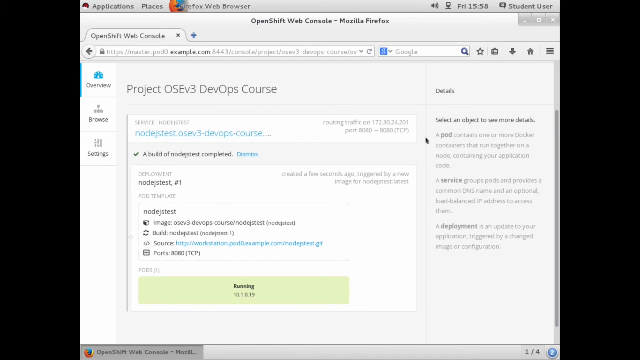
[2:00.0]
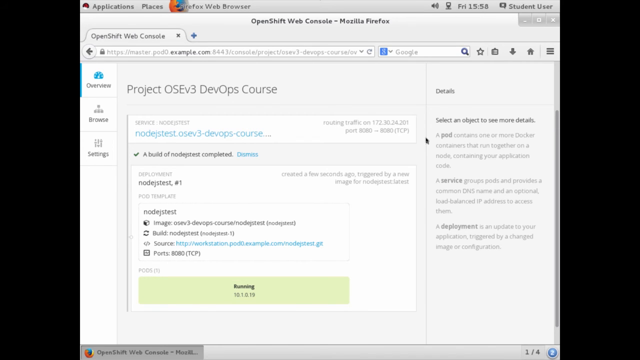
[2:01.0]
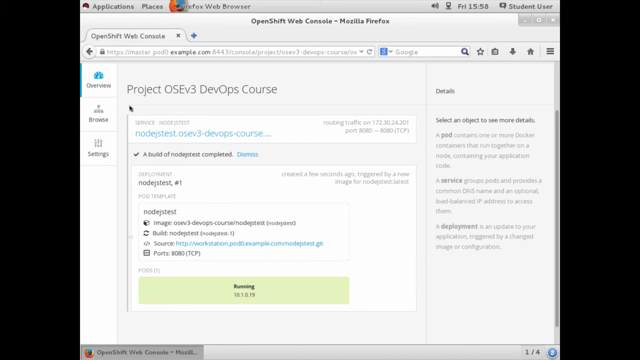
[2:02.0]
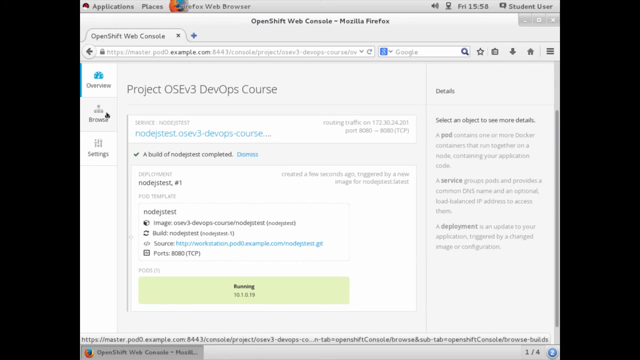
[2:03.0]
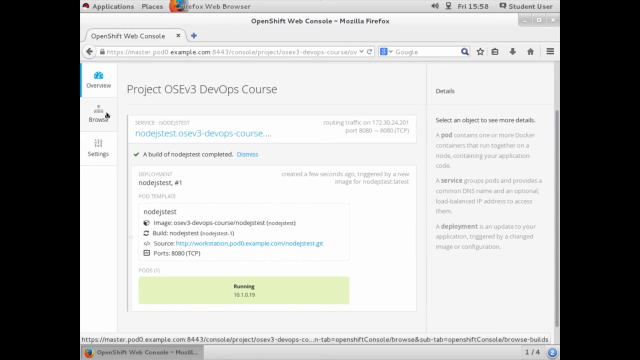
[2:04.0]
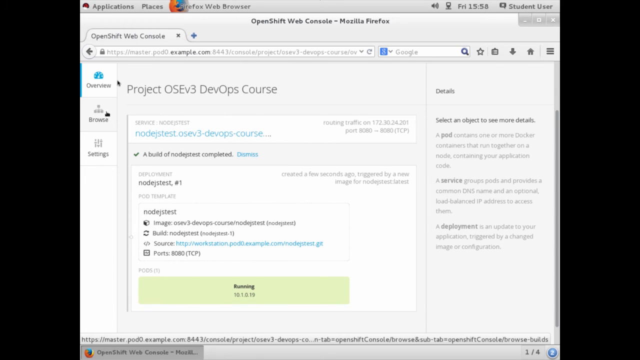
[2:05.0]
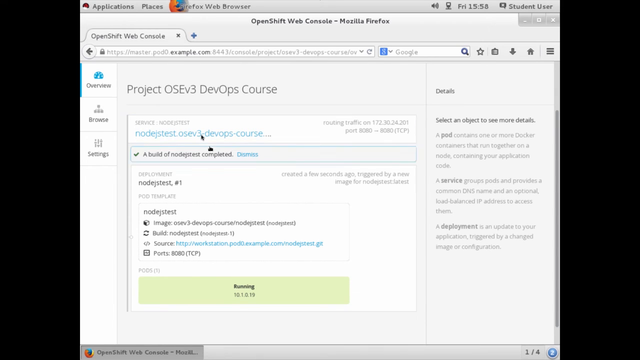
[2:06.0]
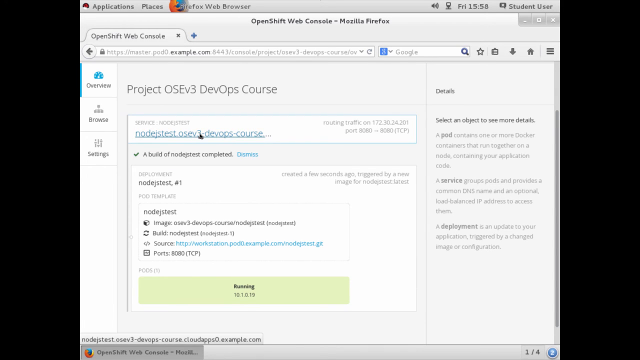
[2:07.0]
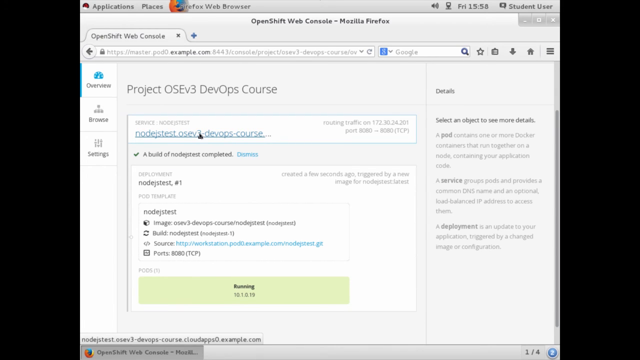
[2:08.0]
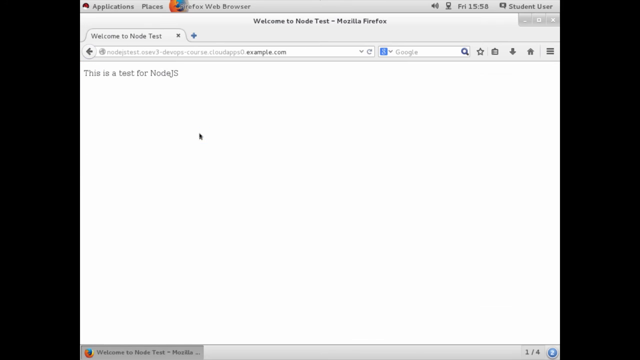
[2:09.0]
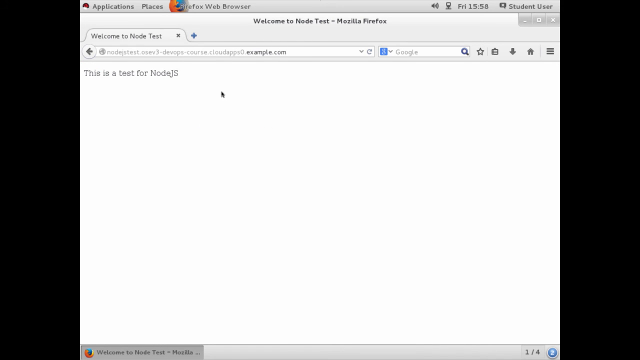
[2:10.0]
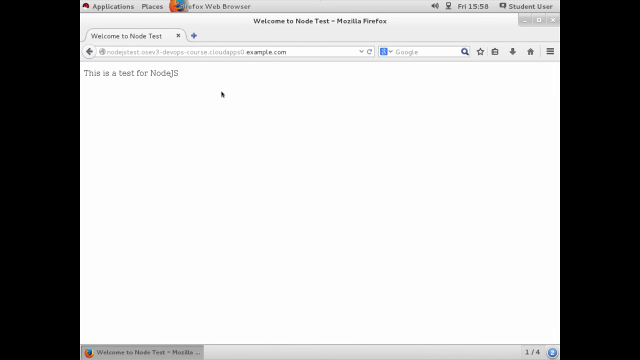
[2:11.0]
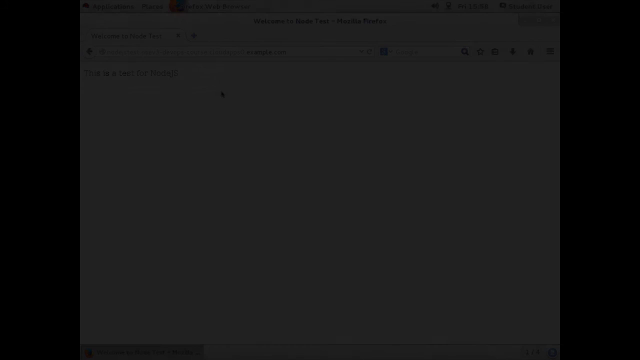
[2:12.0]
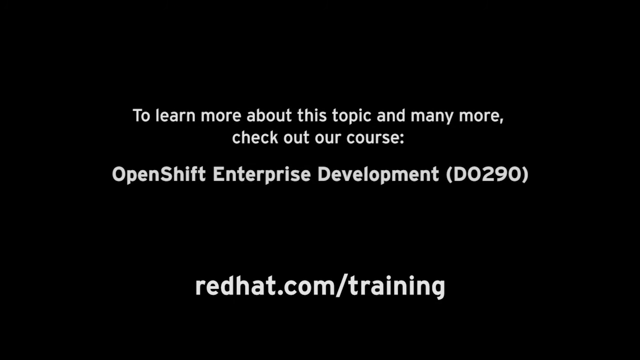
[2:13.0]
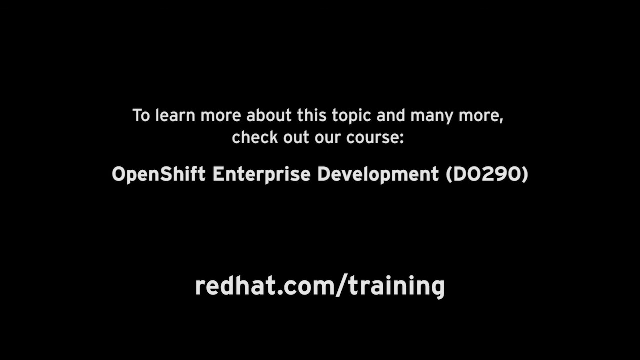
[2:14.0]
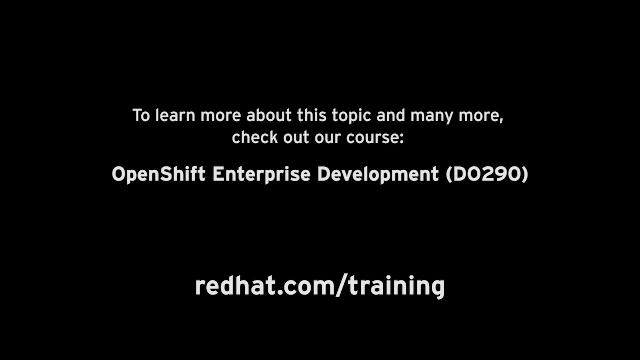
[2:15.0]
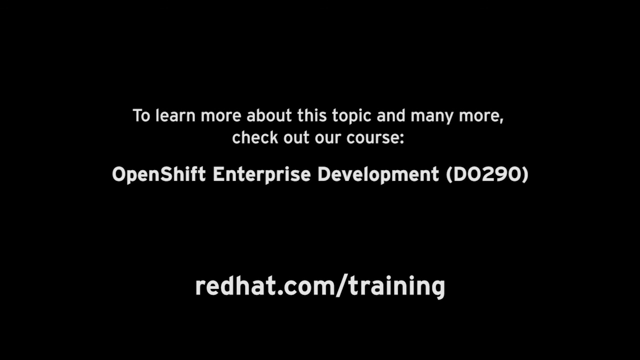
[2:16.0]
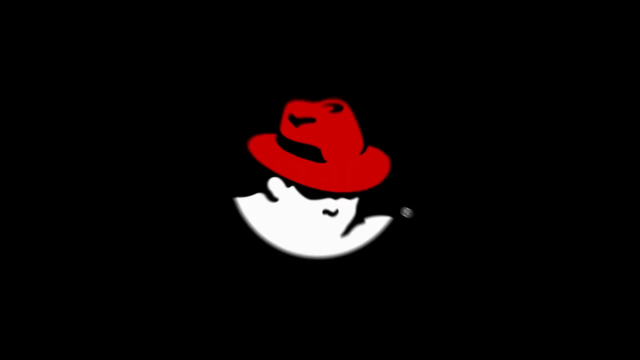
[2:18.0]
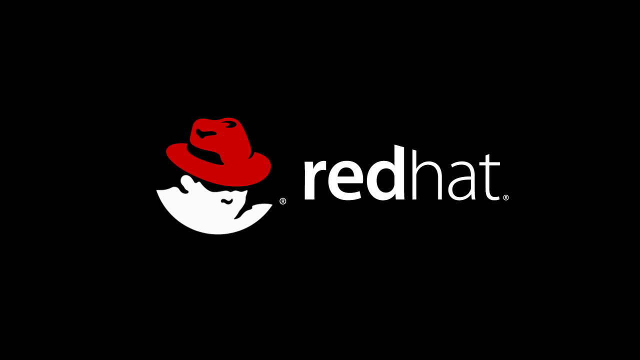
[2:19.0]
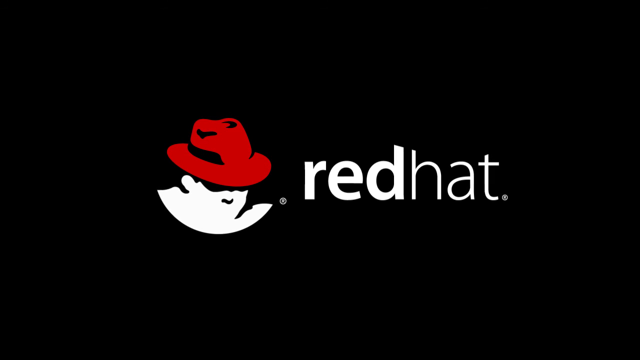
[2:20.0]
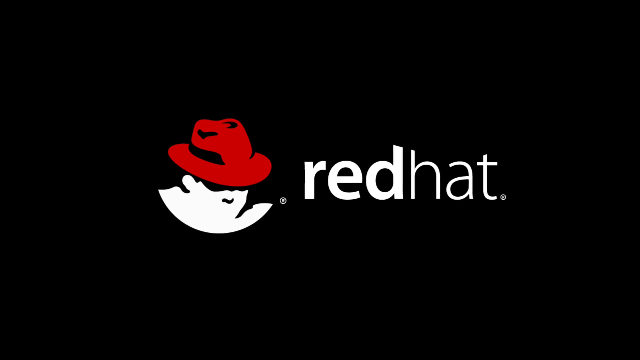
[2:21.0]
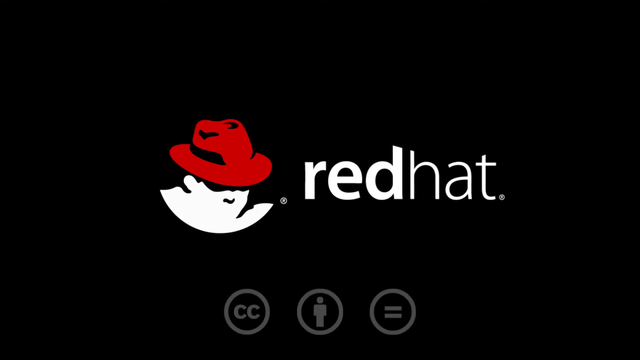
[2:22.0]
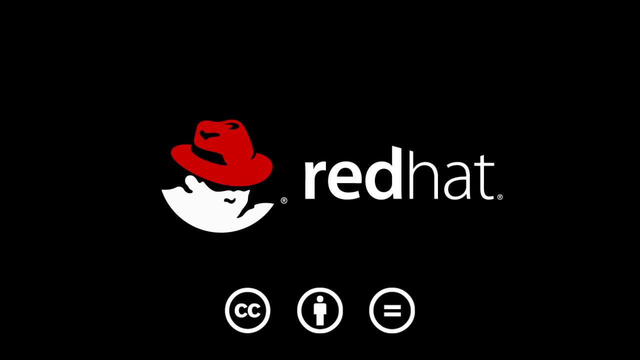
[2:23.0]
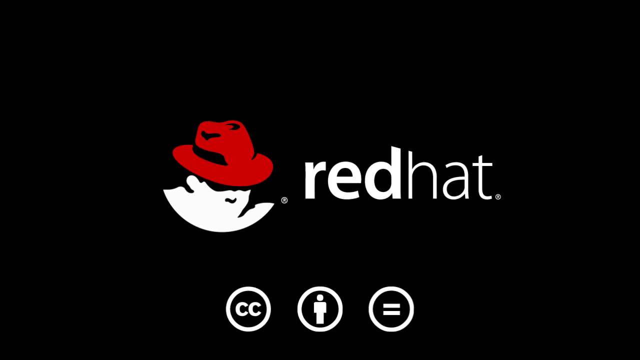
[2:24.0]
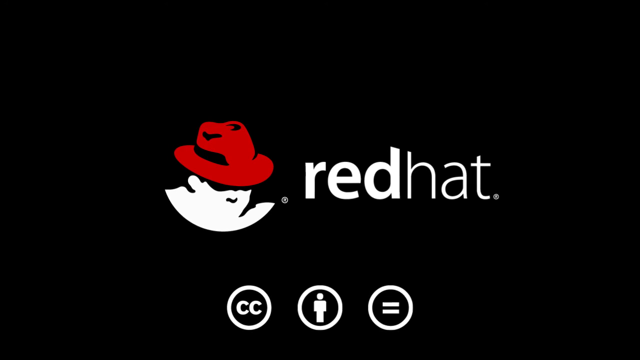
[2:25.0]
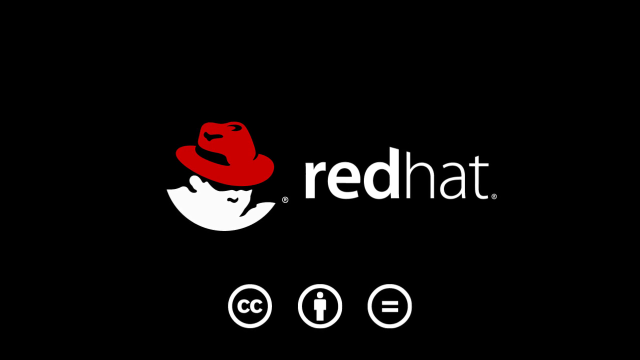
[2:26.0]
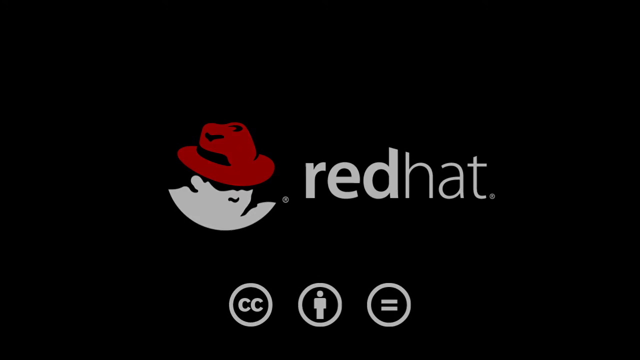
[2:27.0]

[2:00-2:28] The screen recording continues in the Firefox web browser, with a tab that reads "OpenShift web console". It shows a development console that seems to be some kind of code testing. The very top of the page reads "Project OSEV3 DevOps course". On the right is a details column with various blurry text, and the main workspace reads "service Node.js test", followed by a green check mark with text next to it reading "a build of Node.js test completed". The user clicks the "Node.js test" text toward the top of the screen, which navigates to a new web page whose tab reads "Welcome to Node Test". The page has a simple white background with text in the top left reading "This is a test for Node.js". The screen fades to black, and white text on the black background reads "to learn more about this topic and many more, check out our course, OpenShift Enterprise Development, D0290, redhat.com/training".